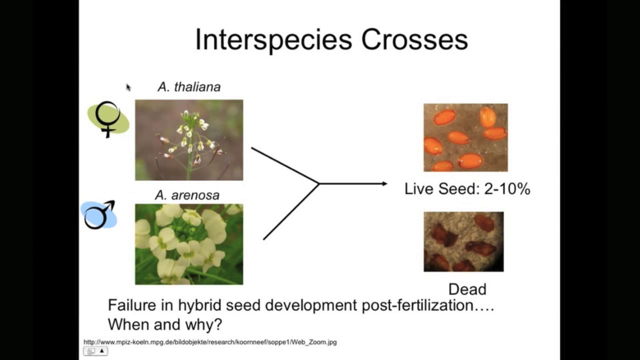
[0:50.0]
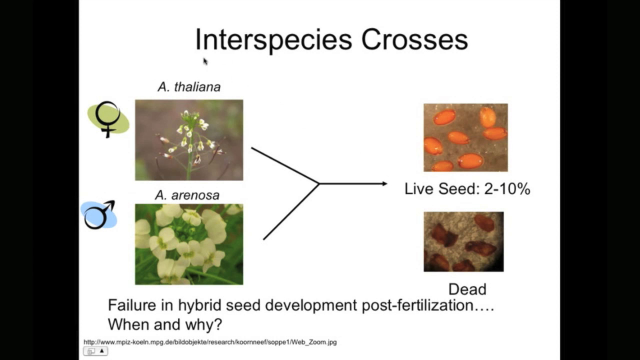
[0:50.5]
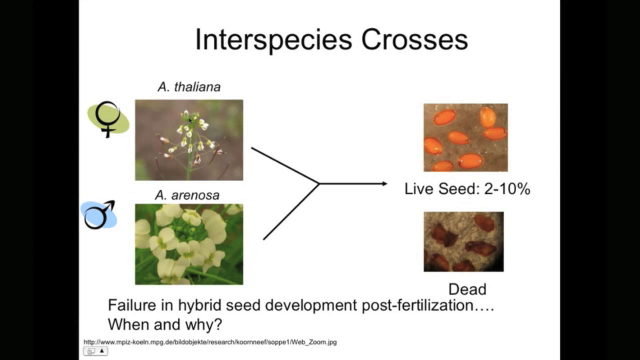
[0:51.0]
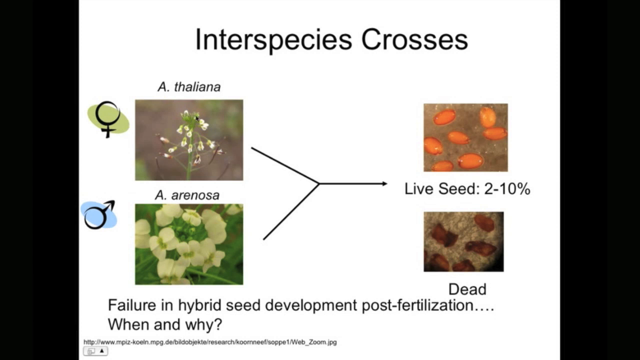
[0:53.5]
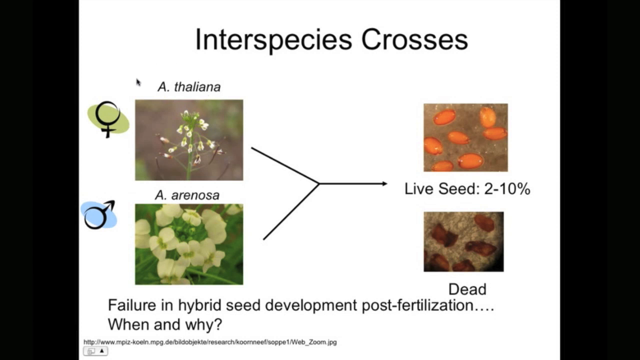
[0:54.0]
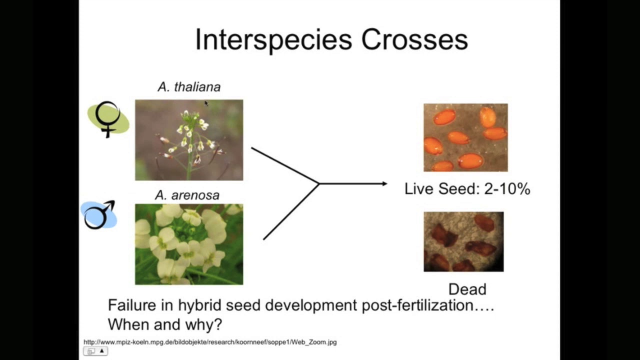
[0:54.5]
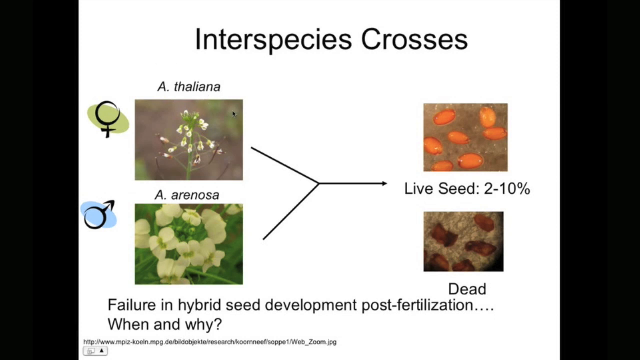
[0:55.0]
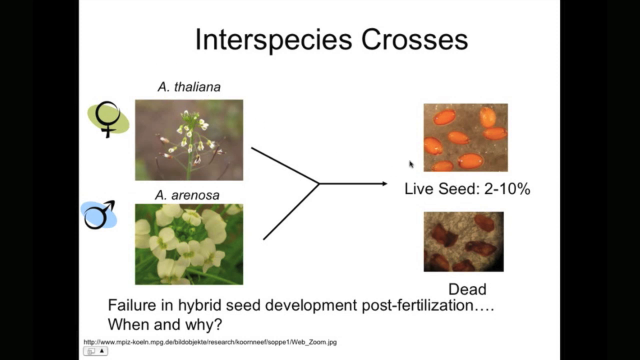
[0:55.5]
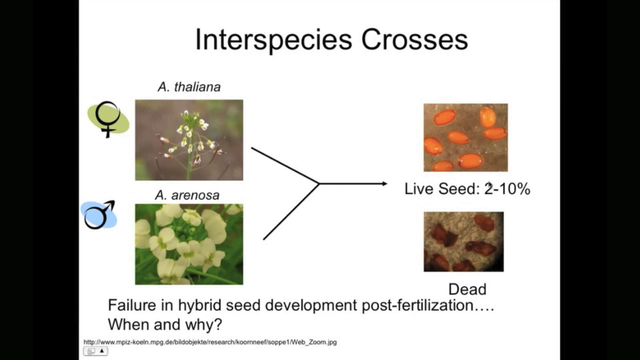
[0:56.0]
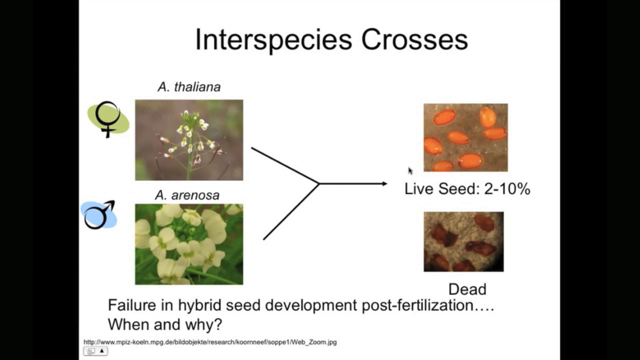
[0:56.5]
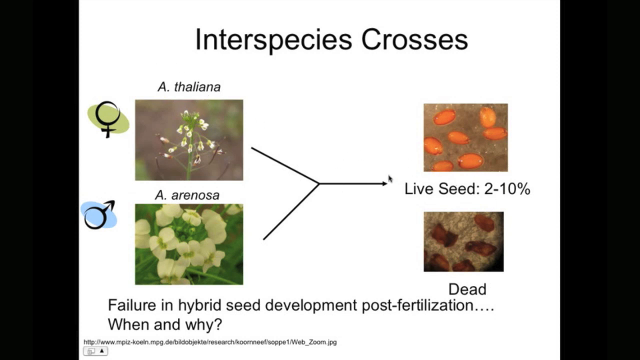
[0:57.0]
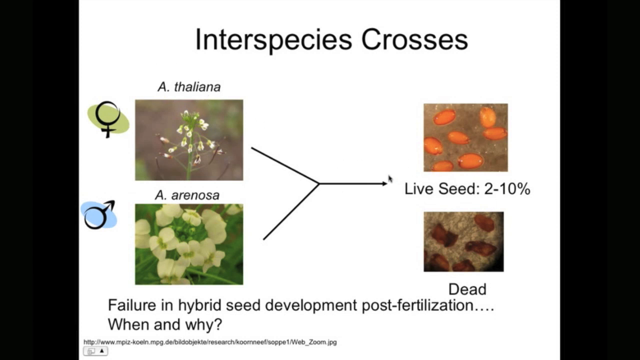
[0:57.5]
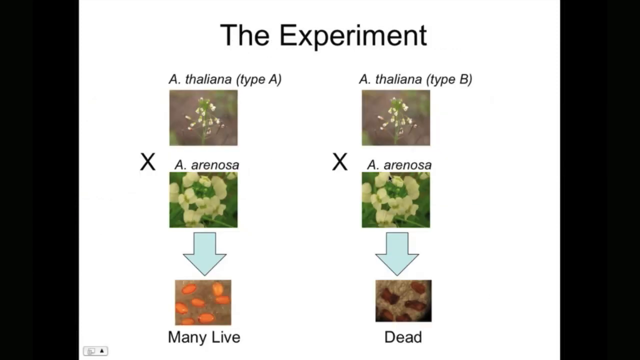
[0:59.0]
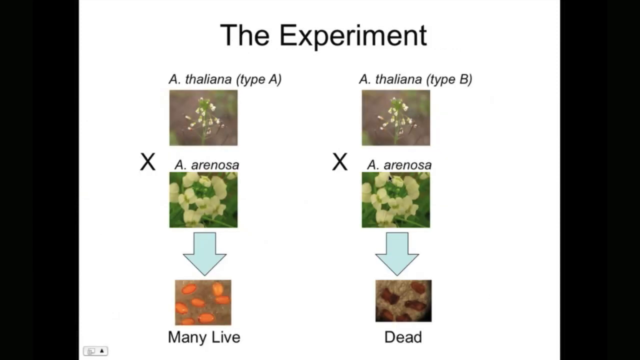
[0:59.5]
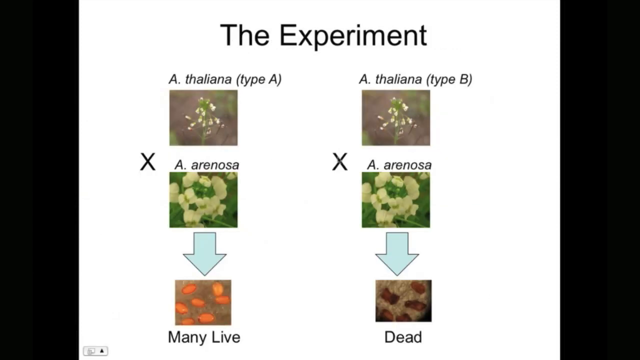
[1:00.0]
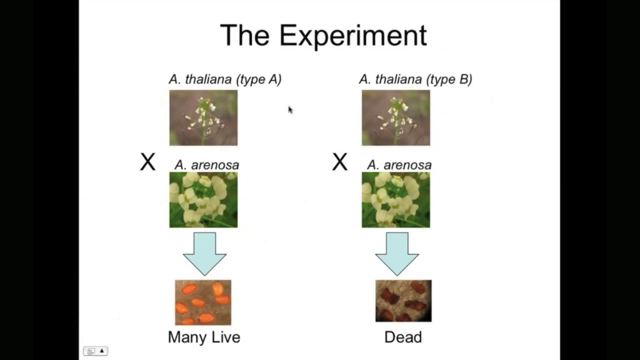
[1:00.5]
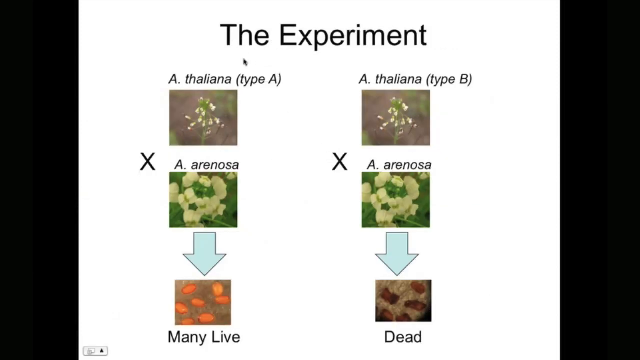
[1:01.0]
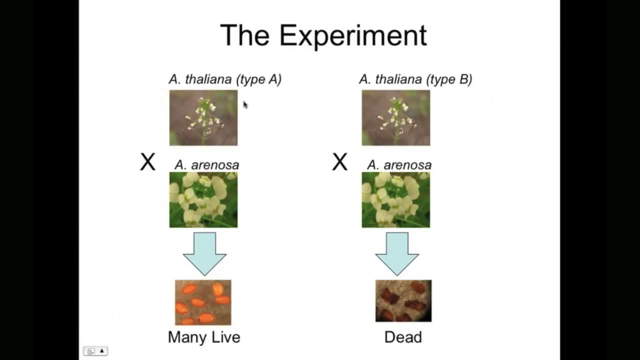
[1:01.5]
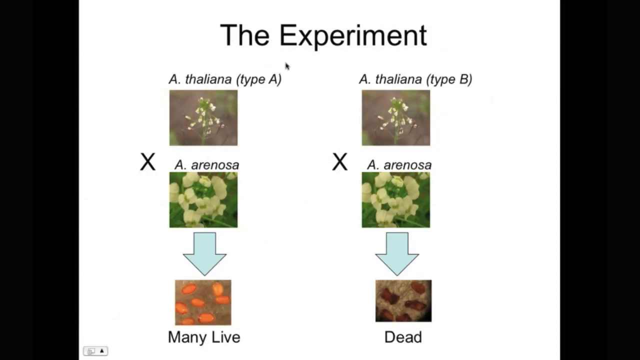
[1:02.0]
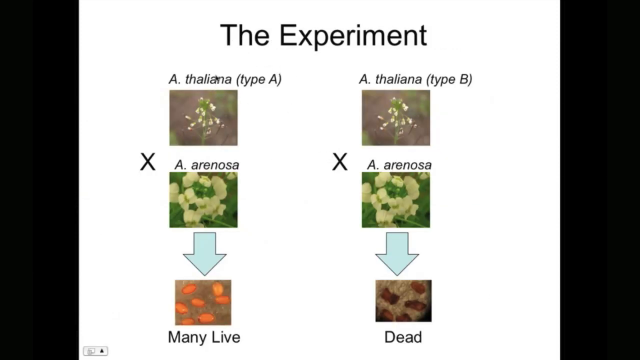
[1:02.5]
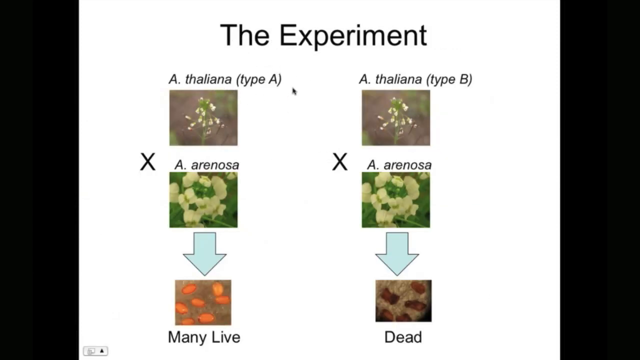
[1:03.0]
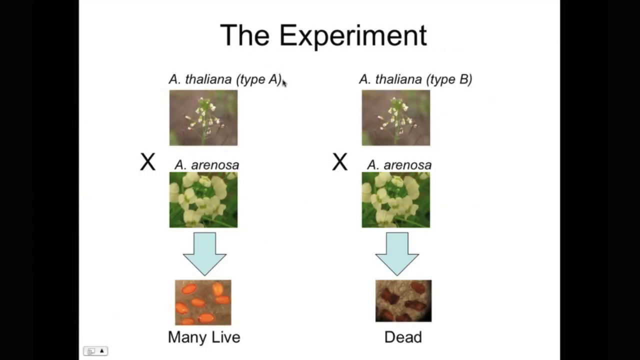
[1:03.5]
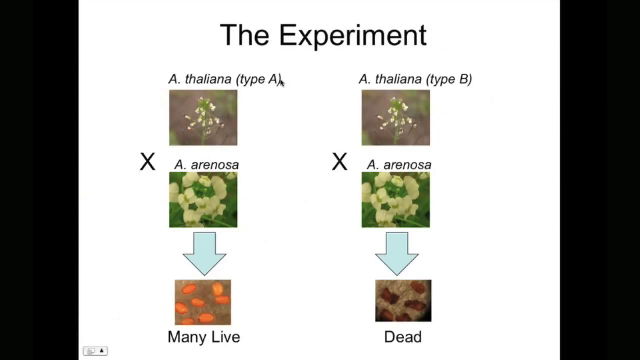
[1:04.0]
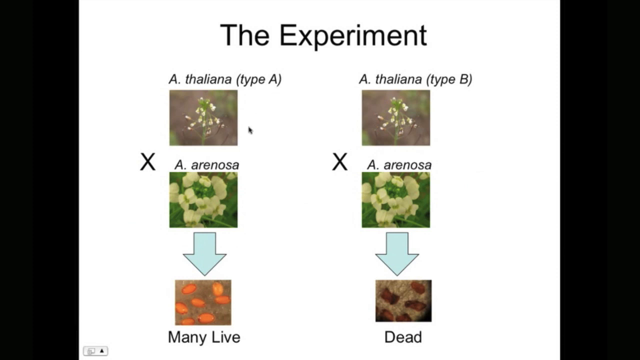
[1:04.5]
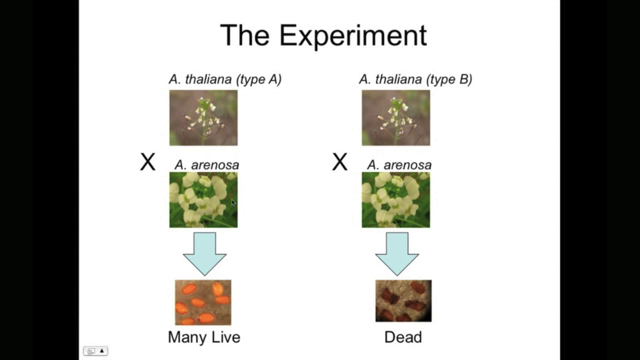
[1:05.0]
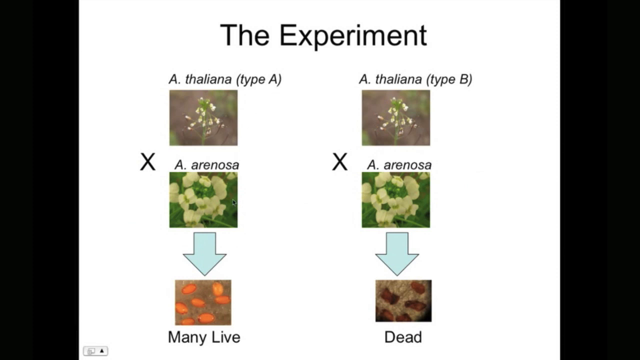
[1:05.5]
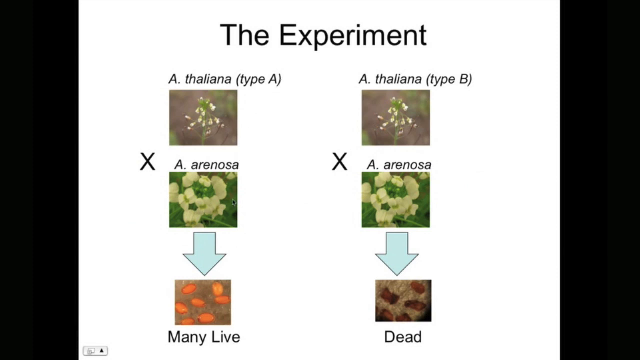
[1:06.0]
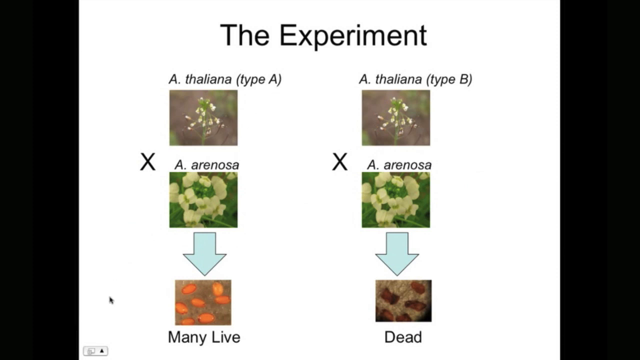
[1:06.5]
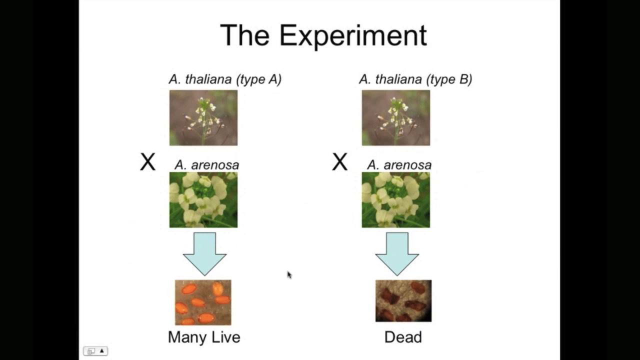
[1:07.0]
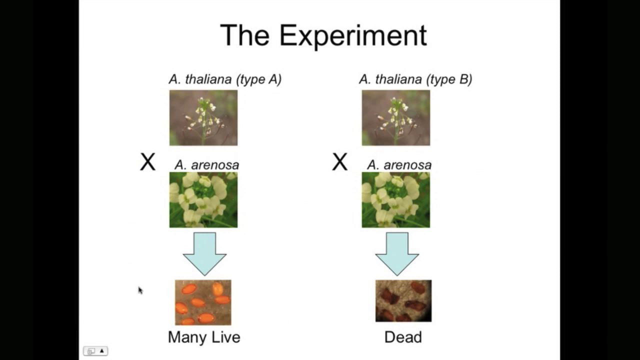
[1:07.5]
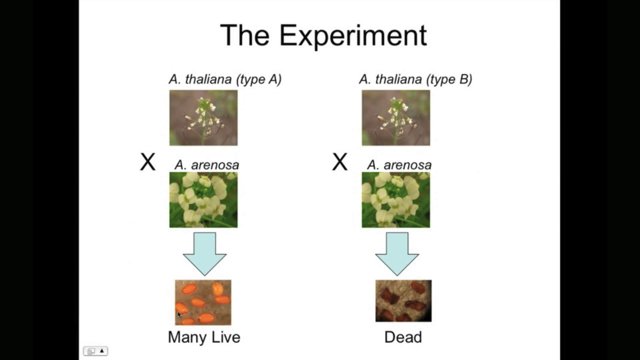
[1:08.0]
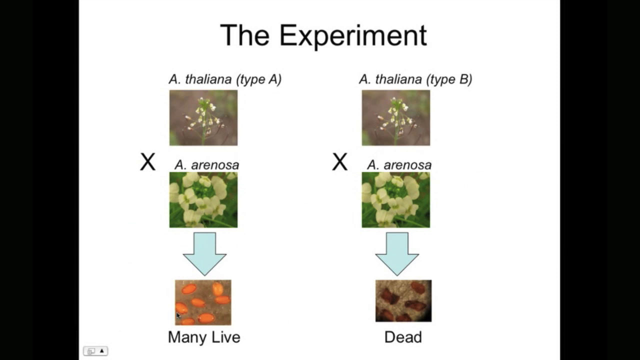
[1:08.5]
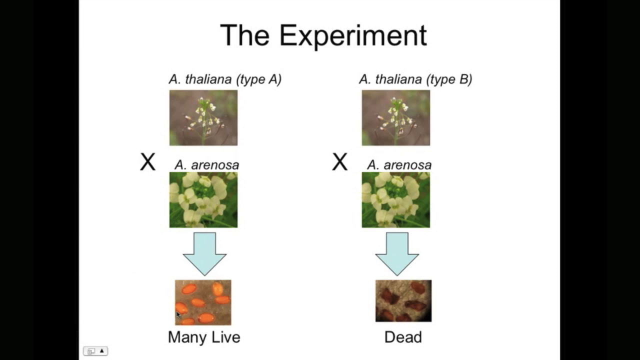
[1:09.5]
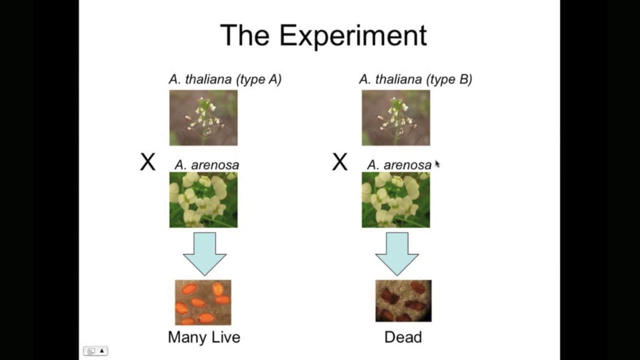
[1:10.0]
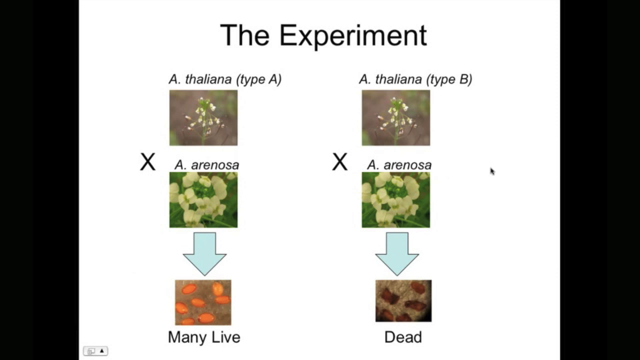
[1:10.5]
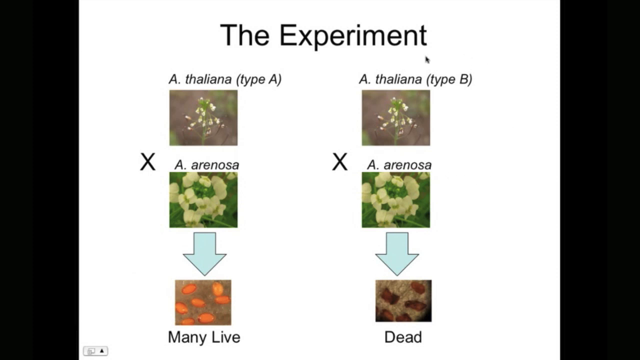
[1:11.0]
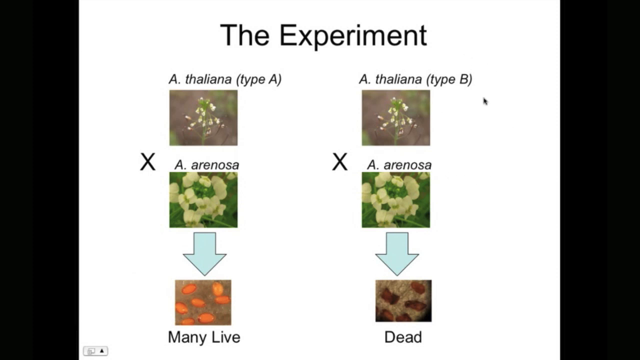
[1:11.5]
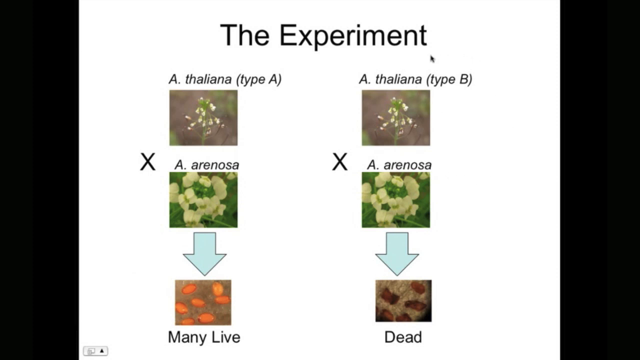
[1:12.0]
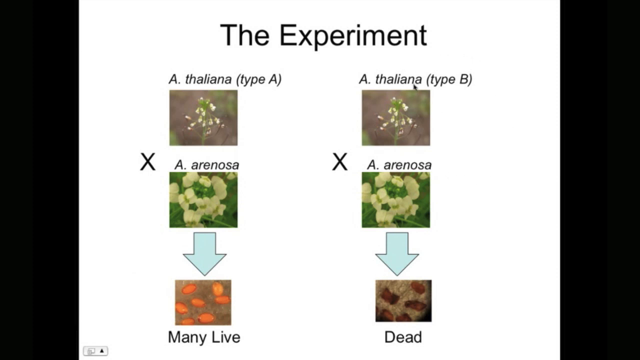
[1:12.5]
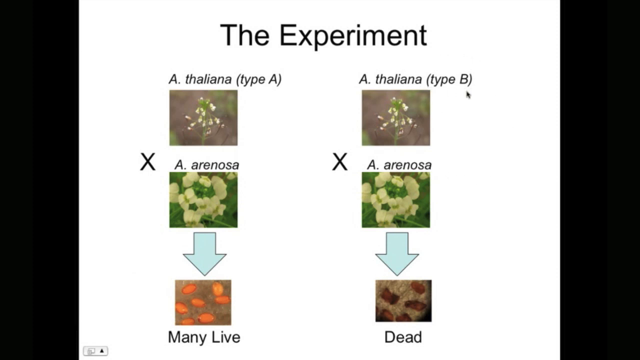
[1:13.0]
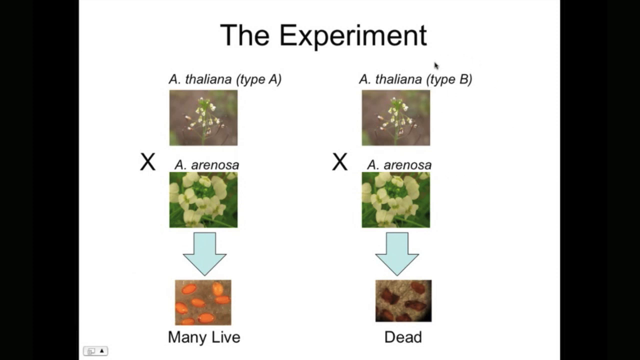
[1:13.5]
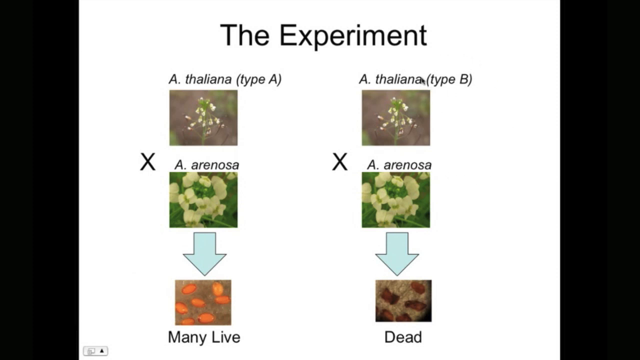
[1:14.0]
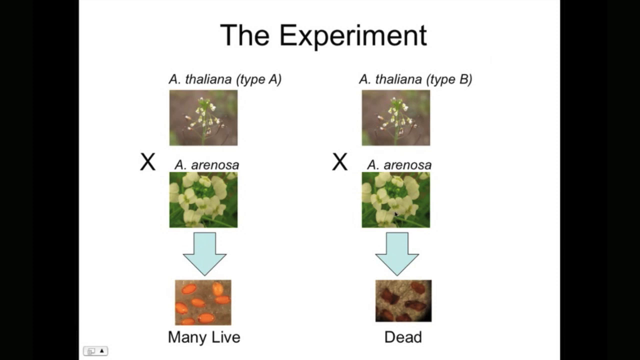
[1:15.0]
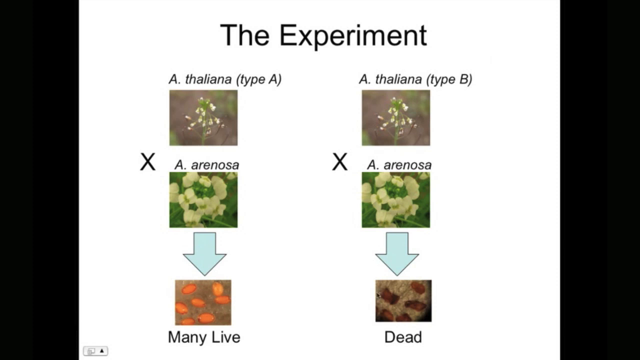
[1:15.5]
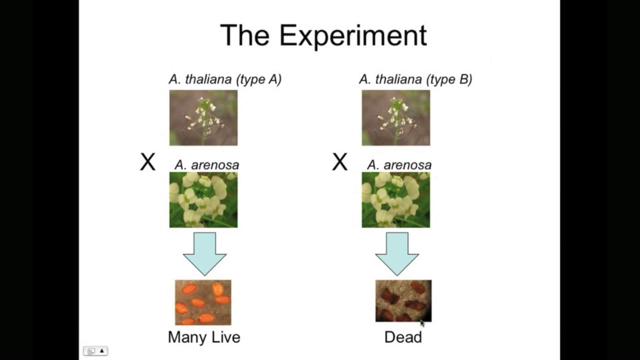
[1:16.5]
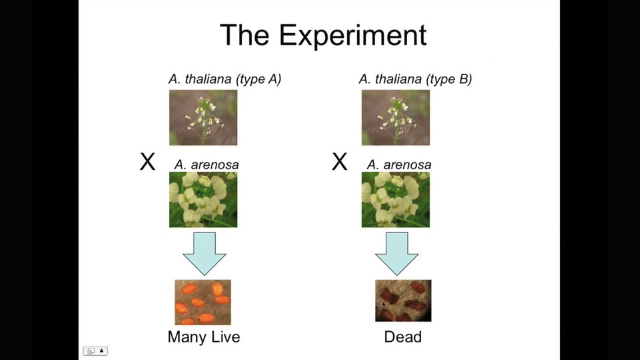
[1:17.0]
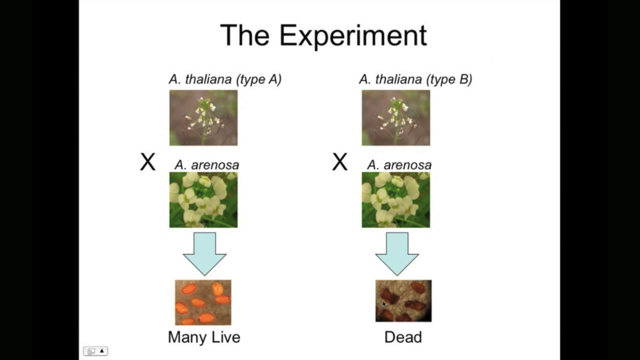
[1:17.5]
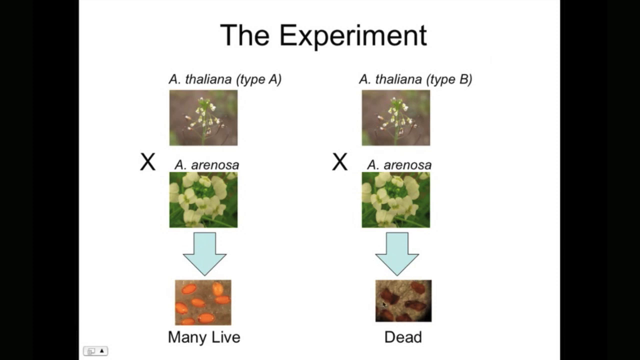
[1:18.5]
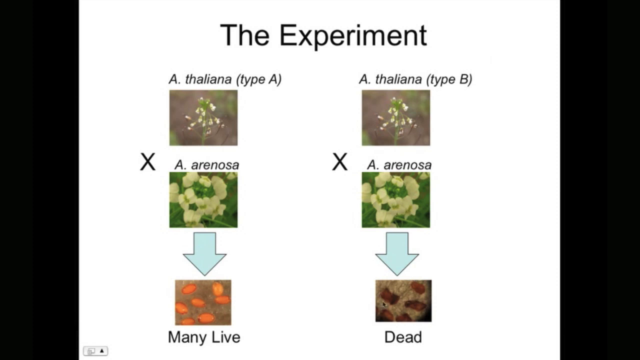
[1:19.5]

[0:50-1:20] The content deals with interspecies crosses in which some are alive and some are dead, and with crosses that fail to achieve seed development after fertilization.